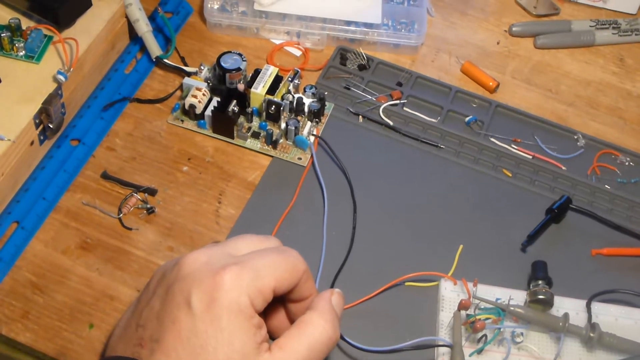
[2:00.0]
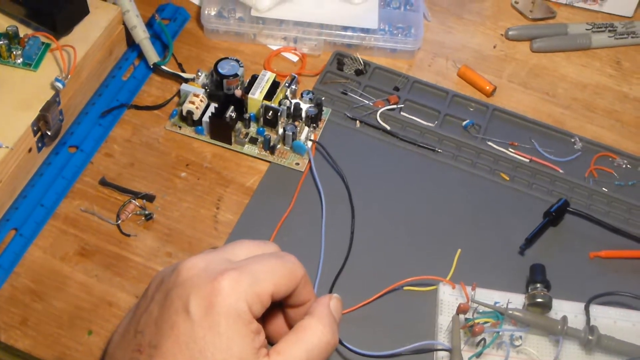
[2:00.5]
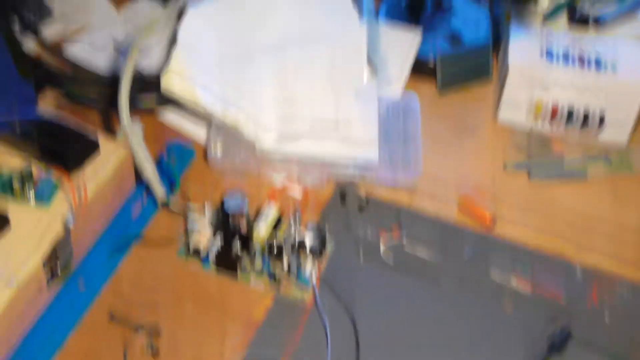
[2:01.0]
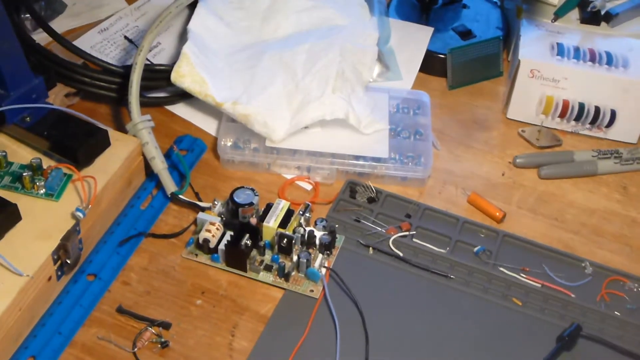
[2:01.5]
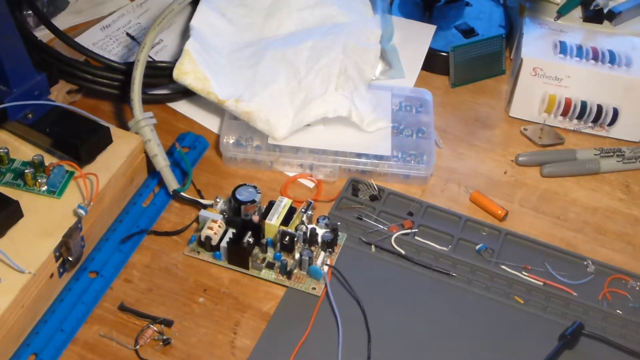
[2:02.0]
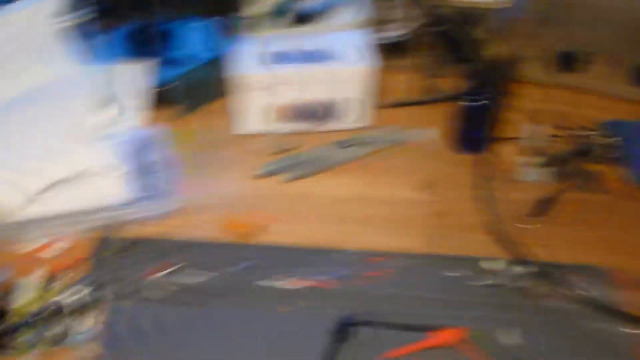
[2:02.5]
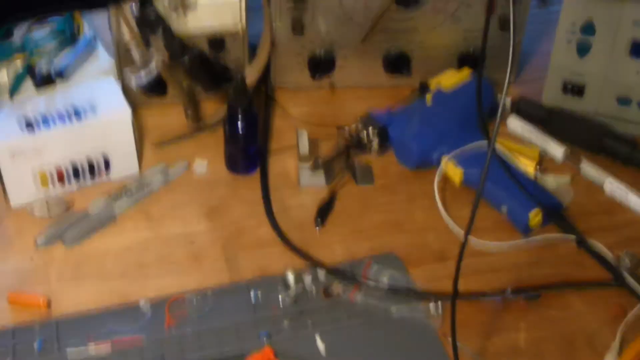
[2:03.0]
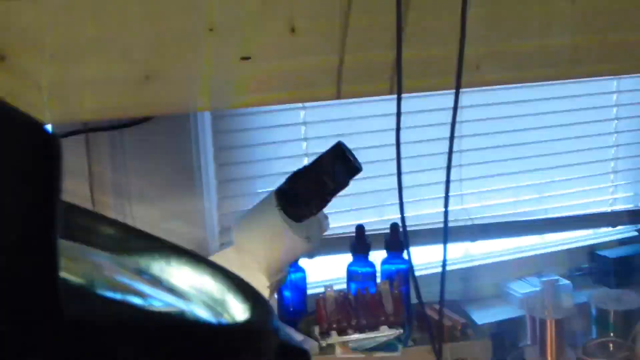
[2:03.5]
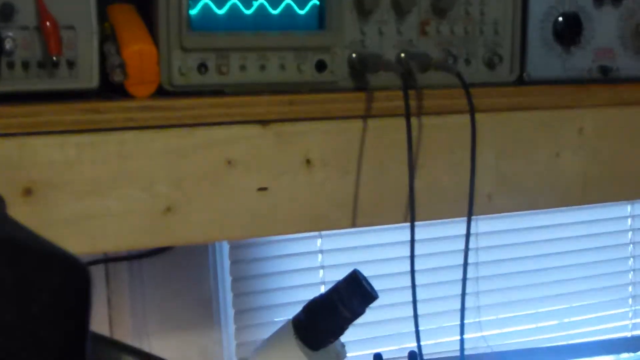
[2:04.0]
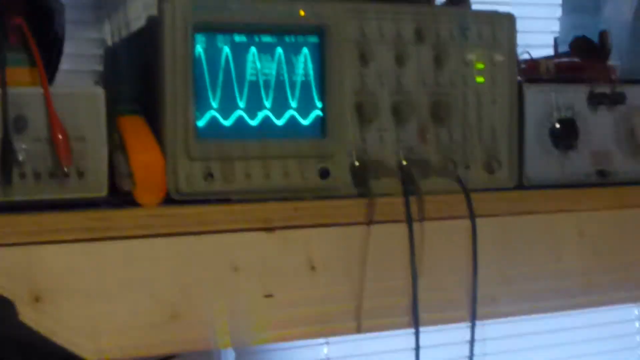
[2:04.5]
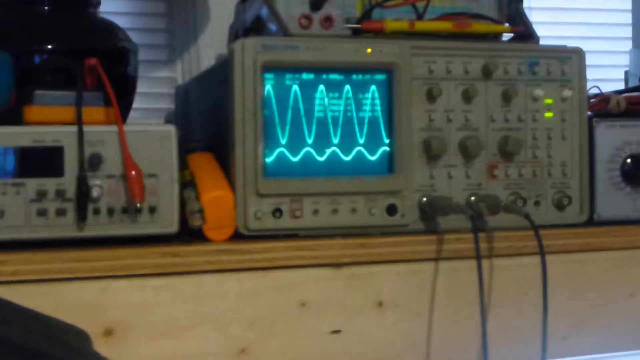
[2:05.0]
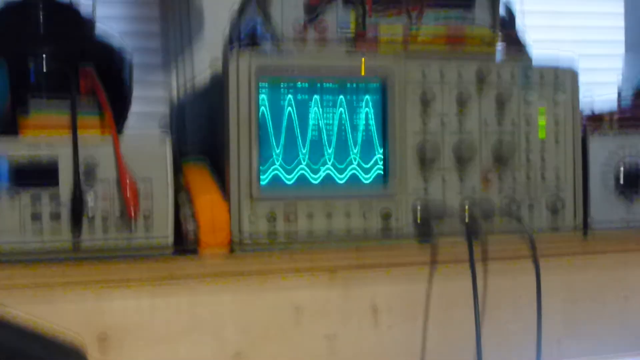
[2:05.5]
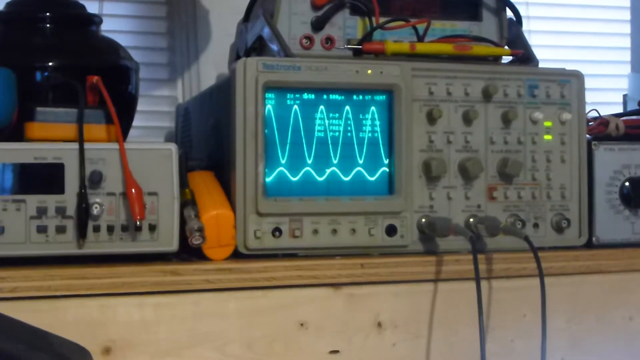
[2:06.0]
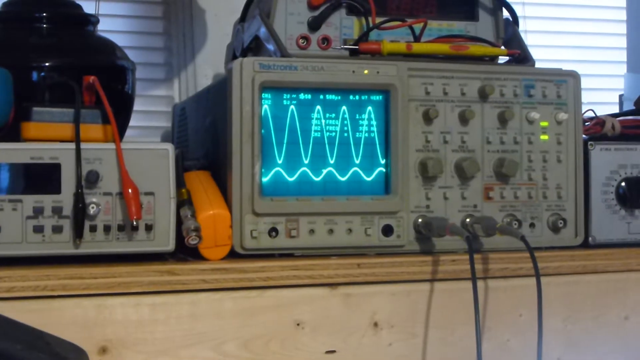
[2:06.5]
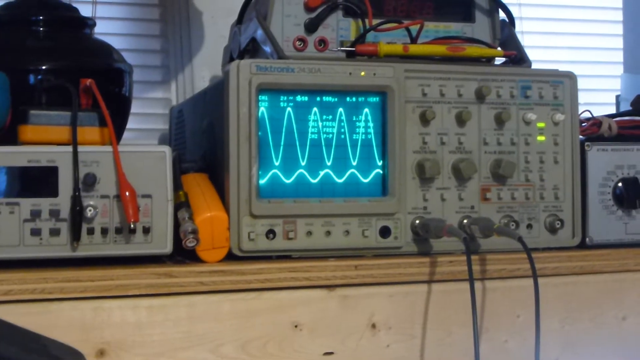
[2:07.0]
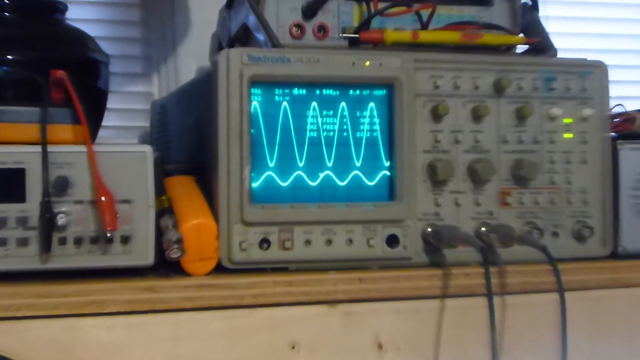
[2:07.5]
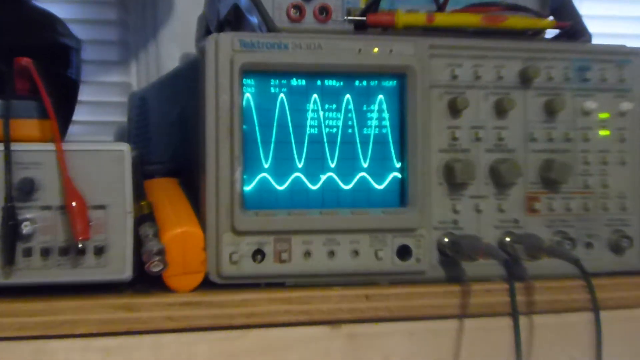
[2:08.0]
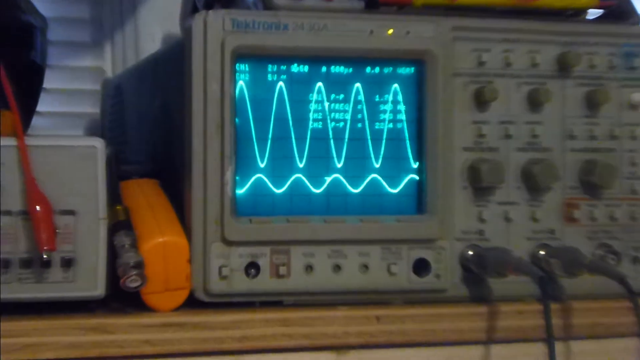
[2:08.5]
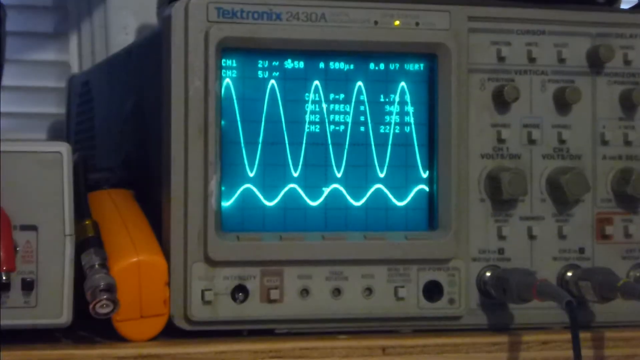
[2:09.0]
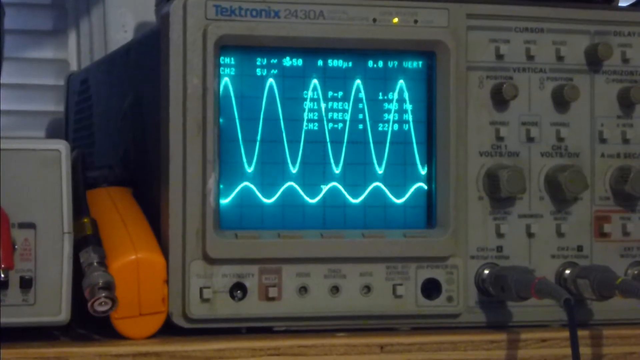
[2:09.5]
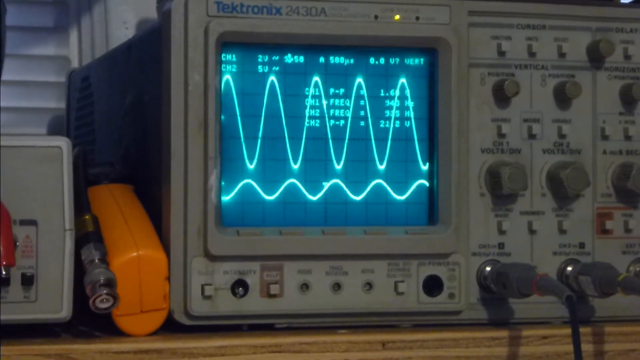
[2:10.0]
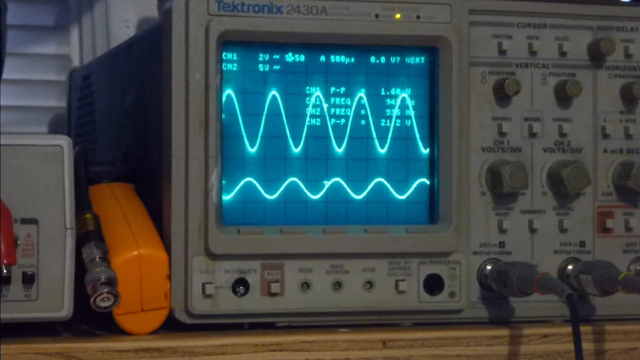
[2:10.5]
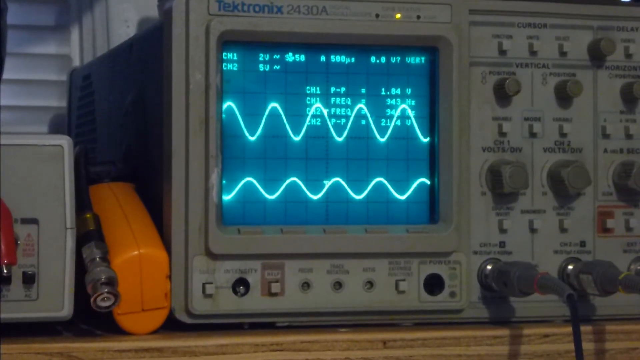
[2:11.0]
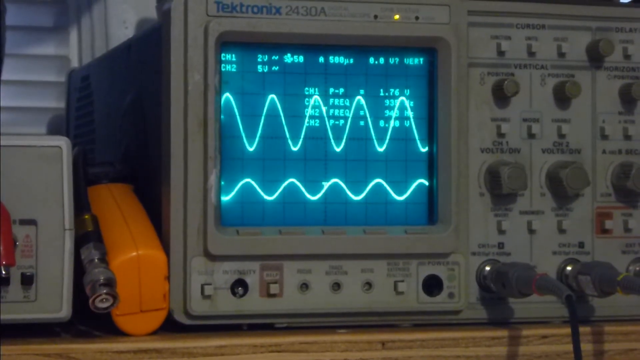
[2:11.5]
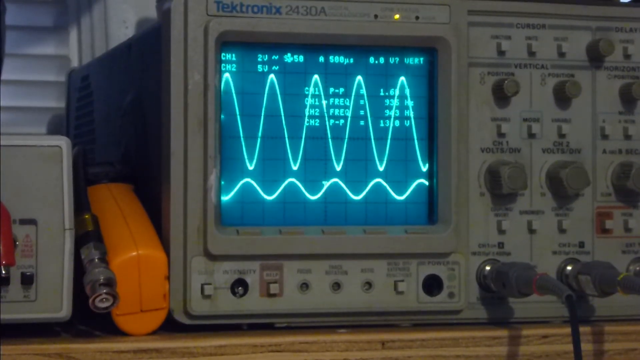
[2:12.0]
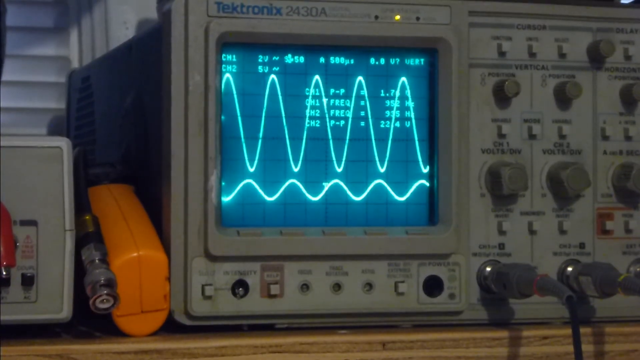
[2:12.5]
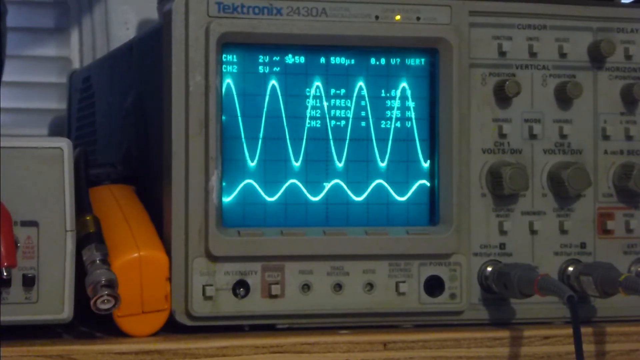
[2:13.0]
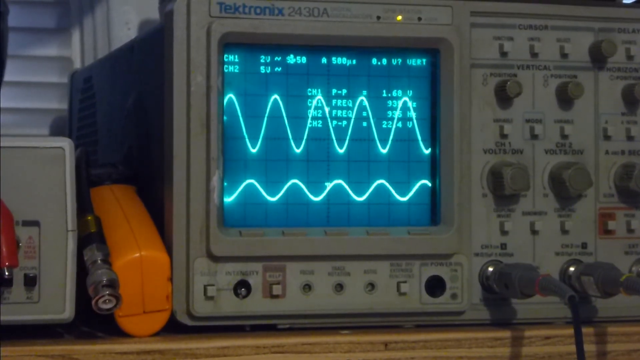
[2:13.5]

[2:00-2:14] After the main board and test board, the view returns to the oscilloscope, where the top sine wave is changing. Two leads, possibly from the oscilloscope, run down to the white test board, where he is probably measuring voltages through components such as the orange capacitor. It is unclear whether he is repairing or just testing the main board at the top left.